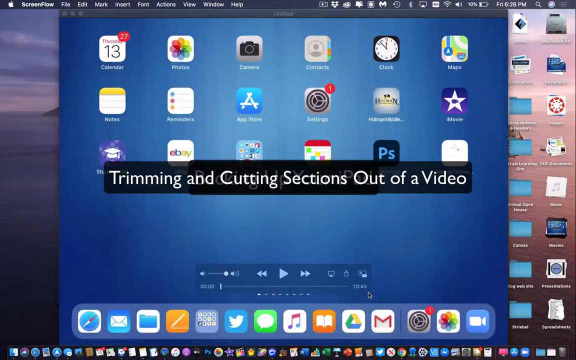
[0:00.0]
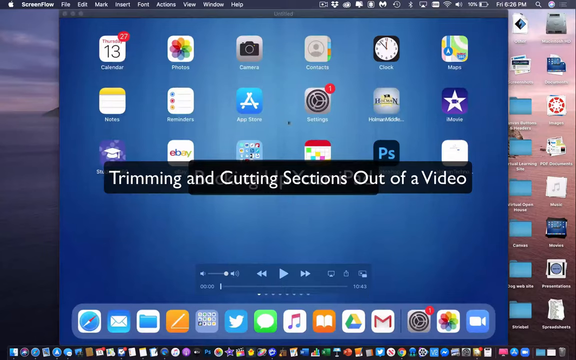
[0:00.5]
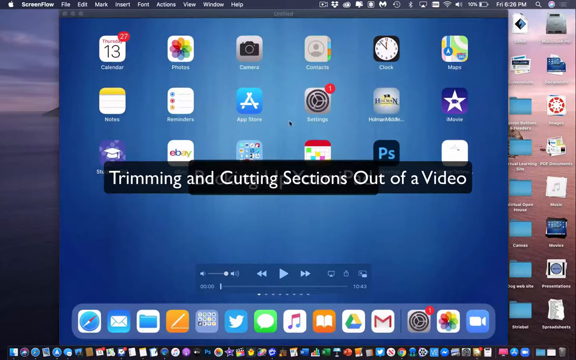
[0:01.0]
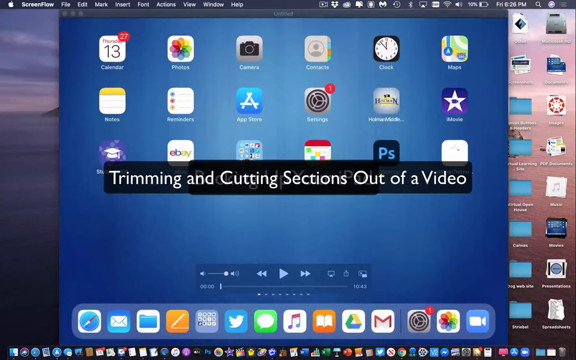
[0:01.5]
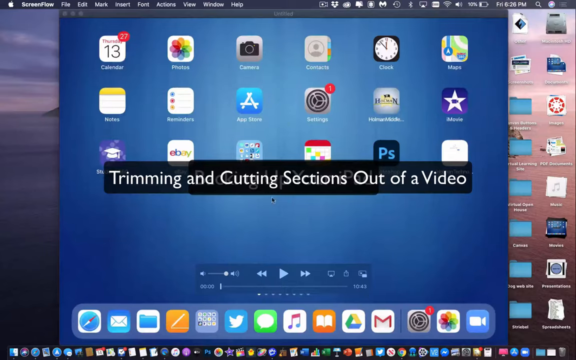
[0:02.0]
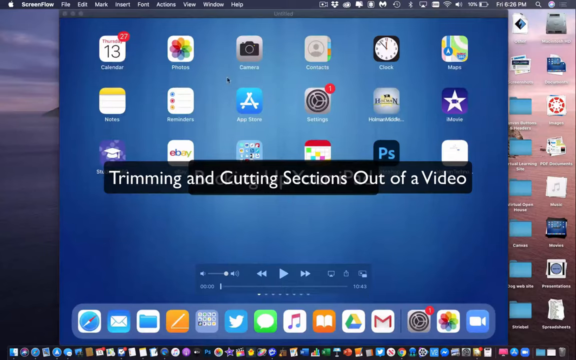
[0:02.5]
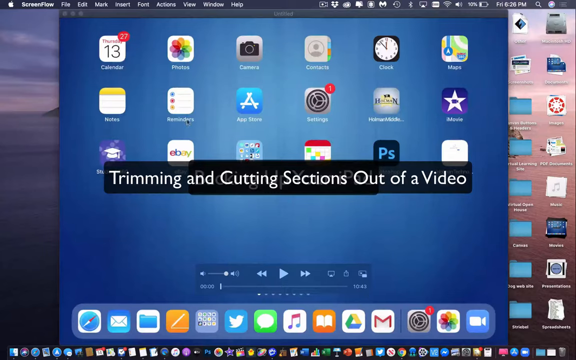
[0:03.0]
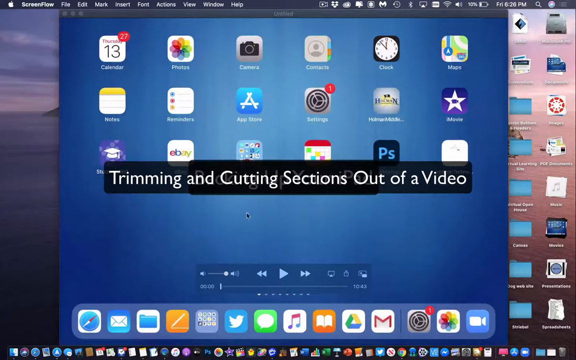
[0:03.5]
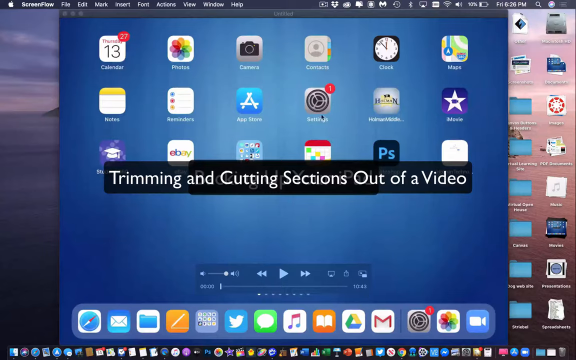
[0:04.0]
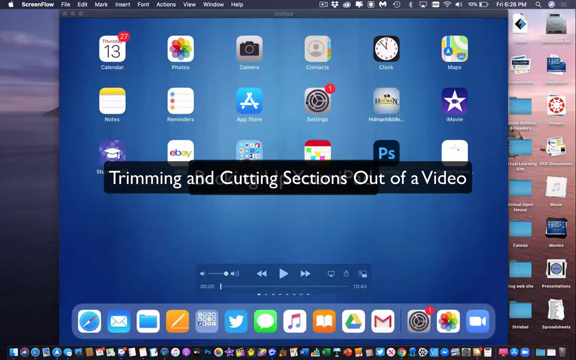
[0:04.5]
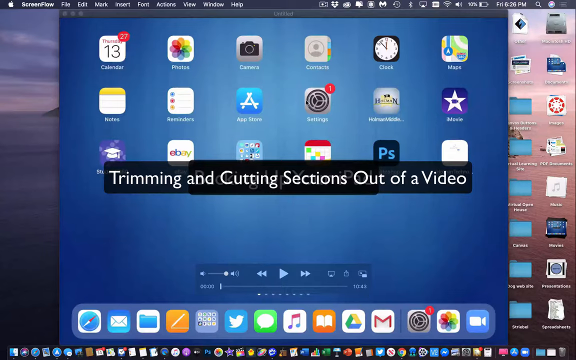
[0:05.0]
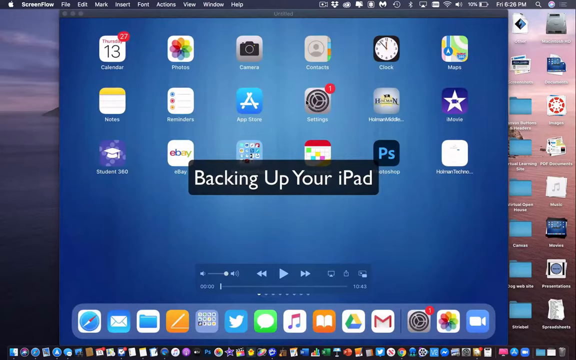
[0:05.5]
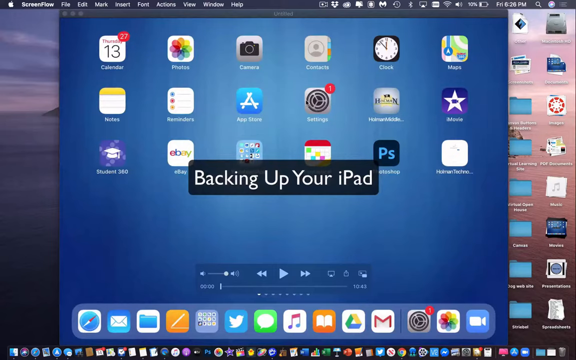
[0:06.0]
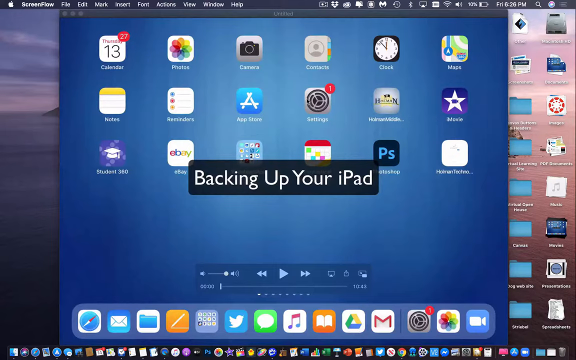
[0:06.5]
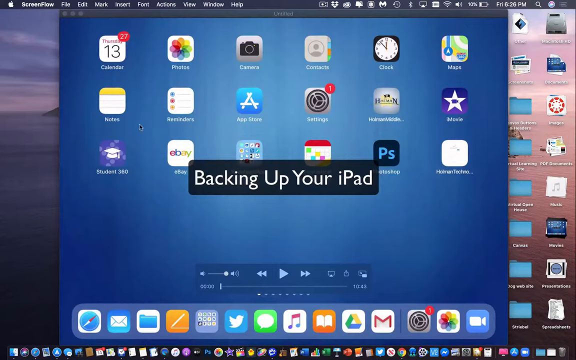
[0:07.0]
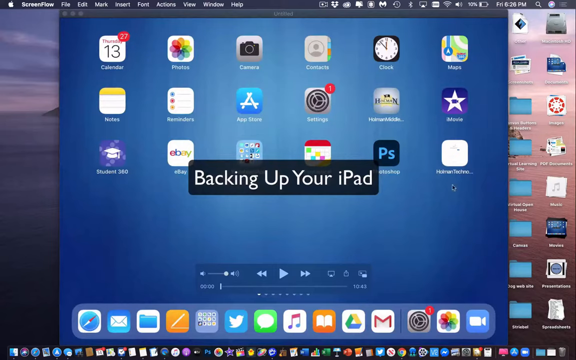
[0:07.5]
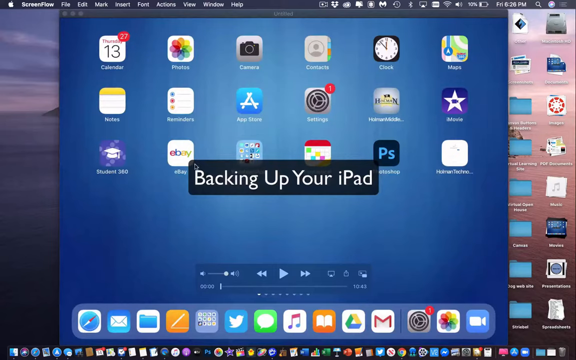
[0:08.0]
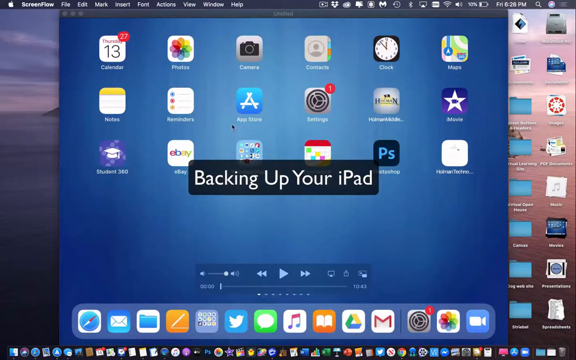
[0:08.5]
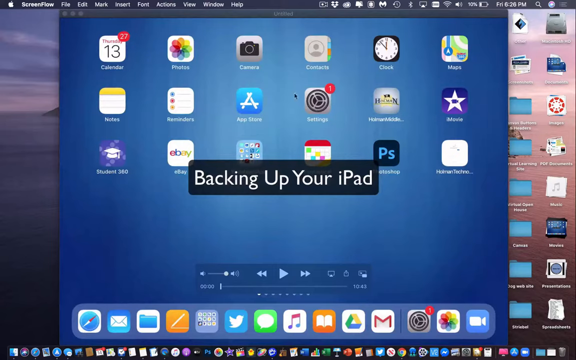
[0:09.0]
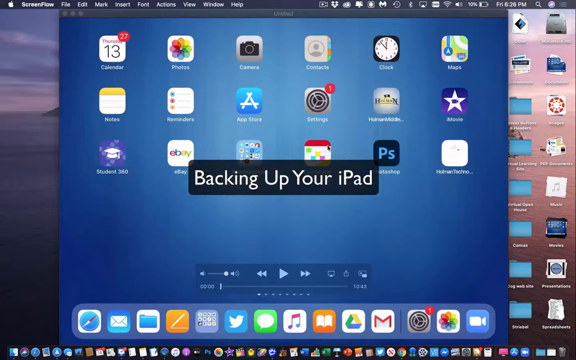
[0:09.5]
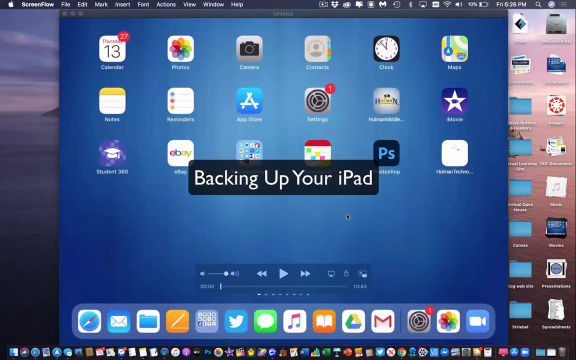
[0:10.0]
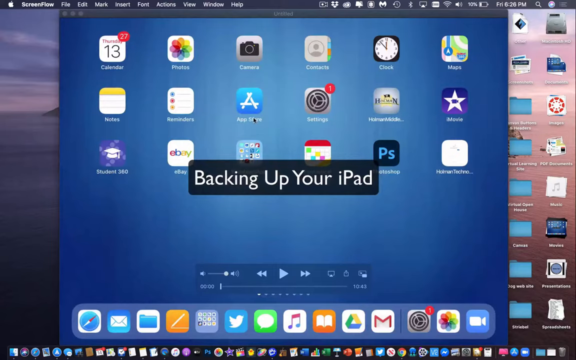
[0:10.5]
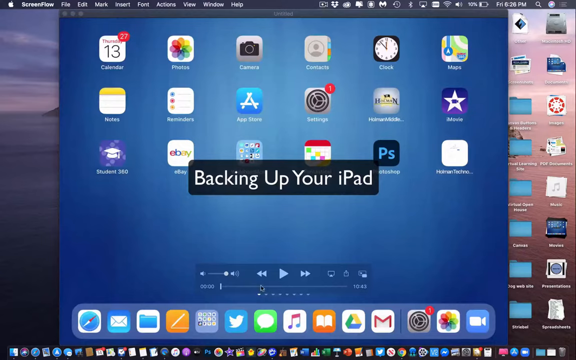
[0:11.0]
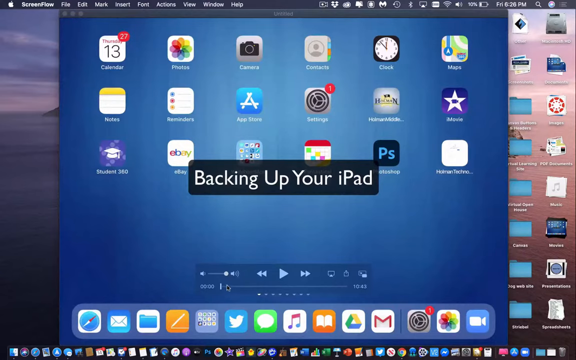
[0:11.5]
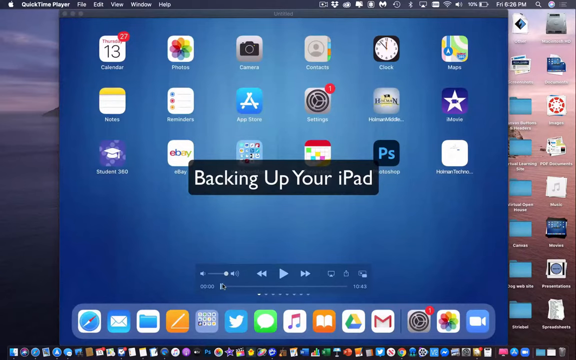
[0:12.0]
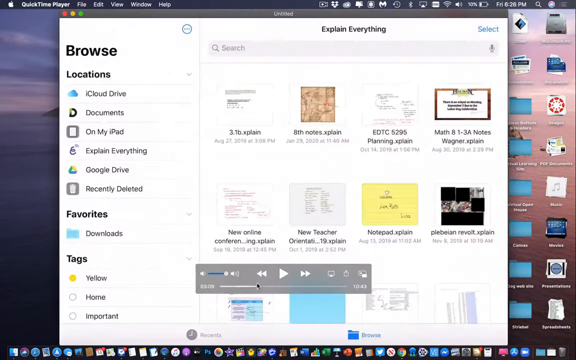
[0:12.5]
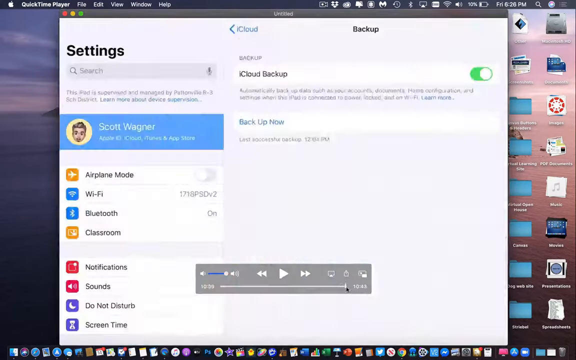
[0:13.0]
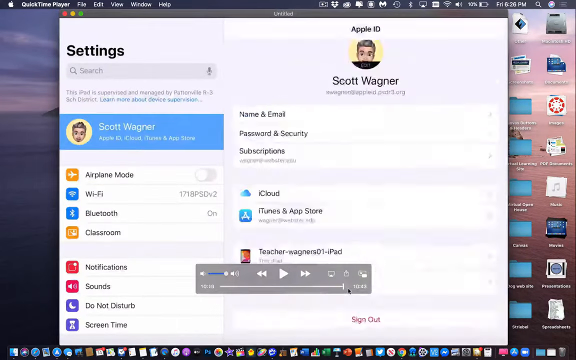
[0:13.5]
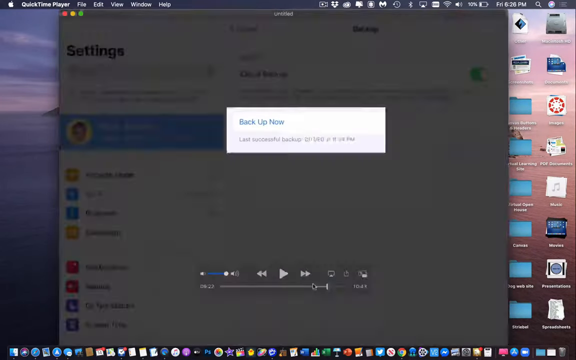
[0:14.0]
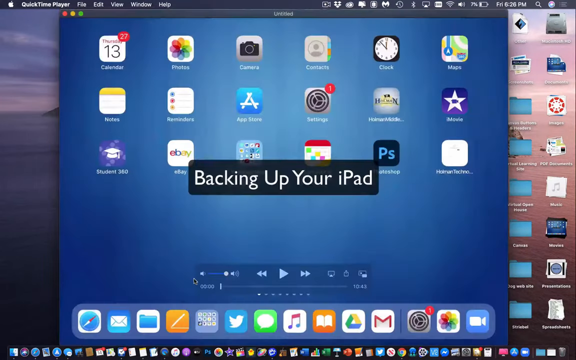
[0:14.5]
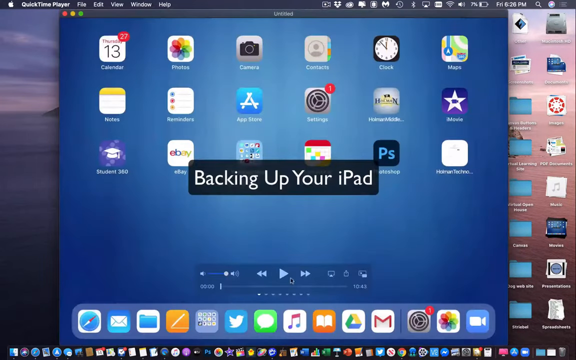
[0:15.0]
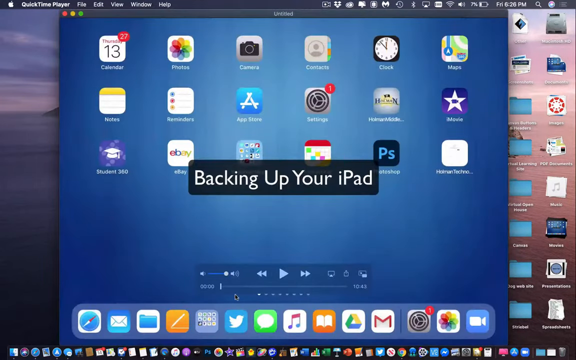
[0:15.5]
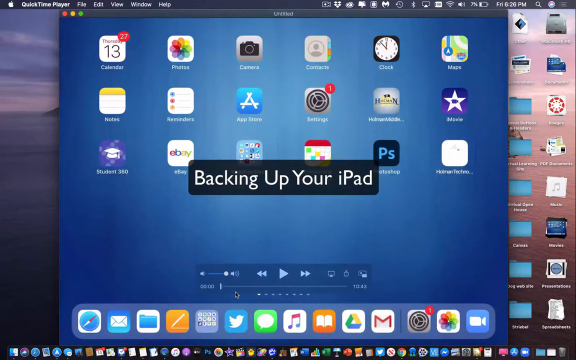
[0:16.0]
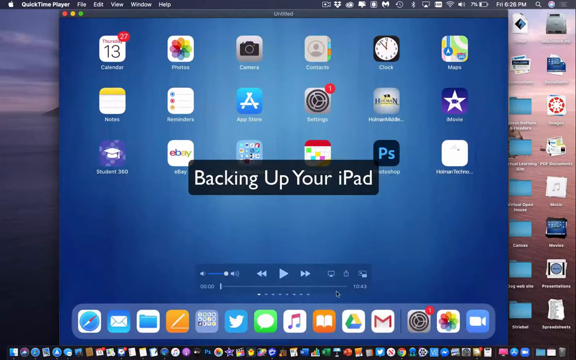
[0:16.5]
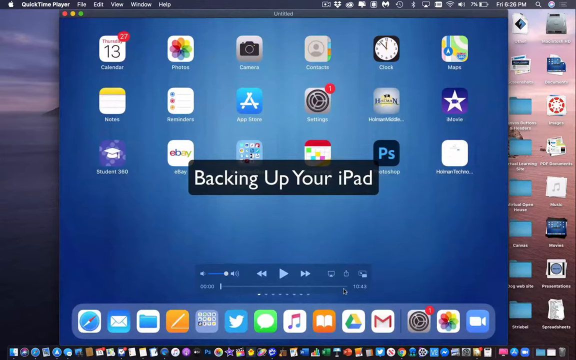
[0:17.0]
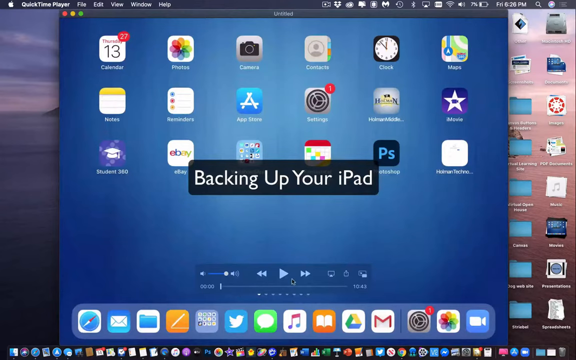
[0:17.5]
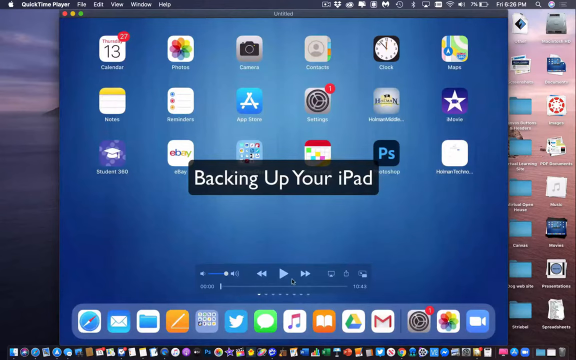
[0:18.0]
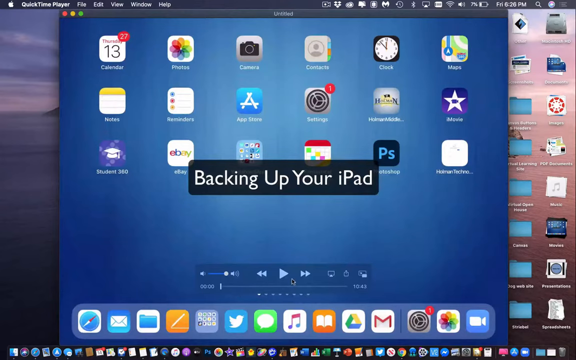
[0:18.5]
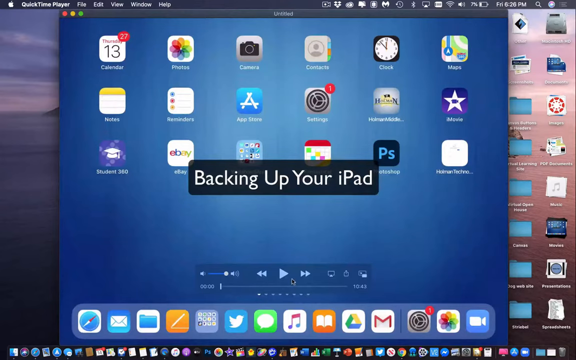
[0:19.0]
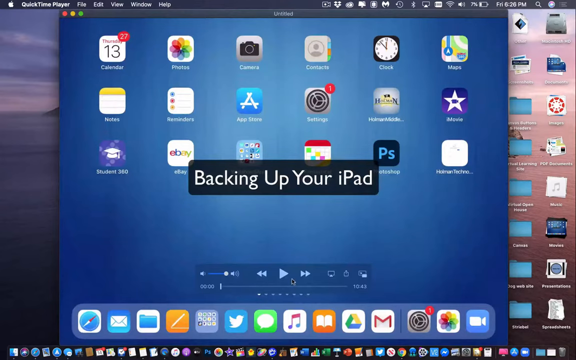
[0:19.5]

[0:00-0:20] This is an instructional video on how to trim and cut sections out of a video. The screen starts on an operating system; it looks like the front of what appears to be a MacBook, some sort of Mac operating system. A bunch of icons are on the front, such as the calendar, photos and the camera. In the center of the screen a black bar says "trimming and cutting sections out of a video." A row of icons runs across the very bottom, a whole bunch of folders are on the right side, and across the very top are many different signals and options, including a battery signal, which makes it look like a laptop, and a network symbol. A black mouse cursor kind of does circles around the center of the screen. The text in the center then changes to "backing up your iPad," so this is being done on an iPad, and the cursor circles around "backing up your iPad" to draw attention to it. The person then scrolls through a bunch of different areas. At the very top right it says "Apple ID, Scott Wagner," and the settings area is open. In the center of the screen there is a play bar with play, rewind, fast forward and volume buttons. The screen then moves very quickly through different options and settings, almost like a blur, and then goes back to the first screen that says "backing up your iPad."